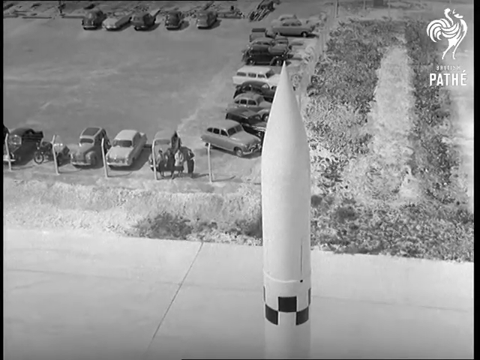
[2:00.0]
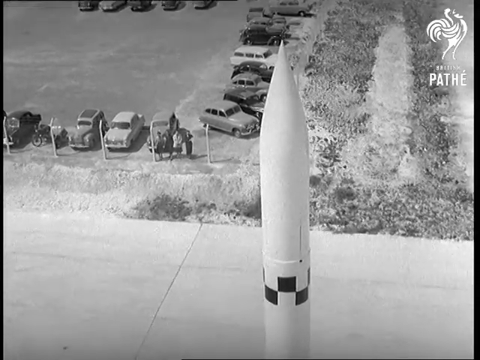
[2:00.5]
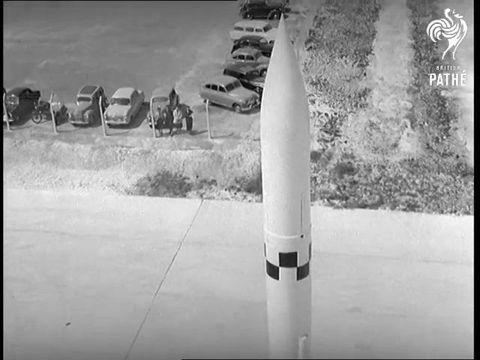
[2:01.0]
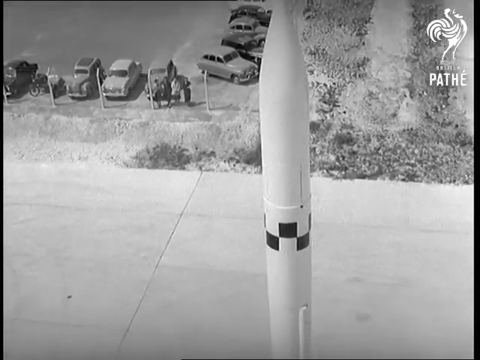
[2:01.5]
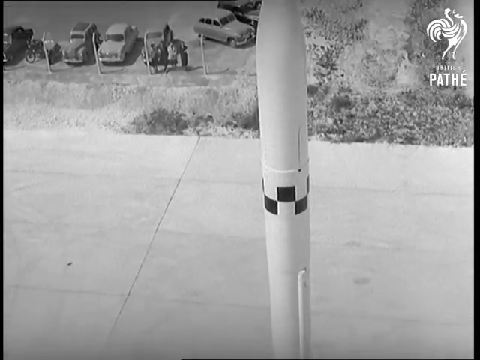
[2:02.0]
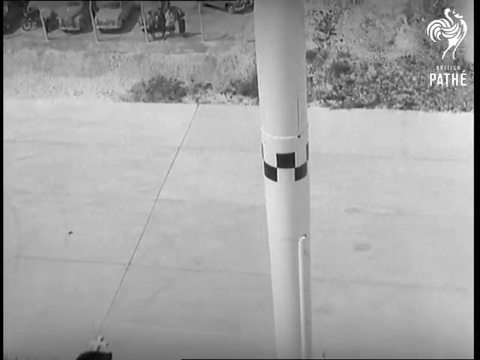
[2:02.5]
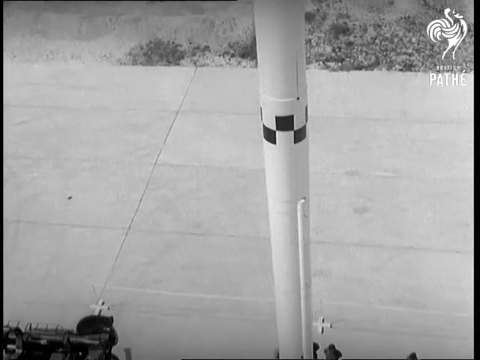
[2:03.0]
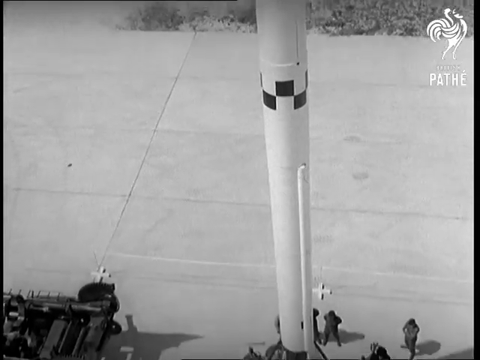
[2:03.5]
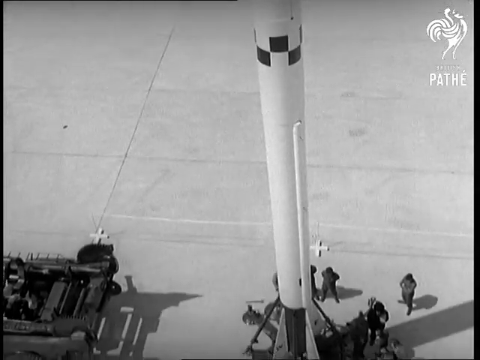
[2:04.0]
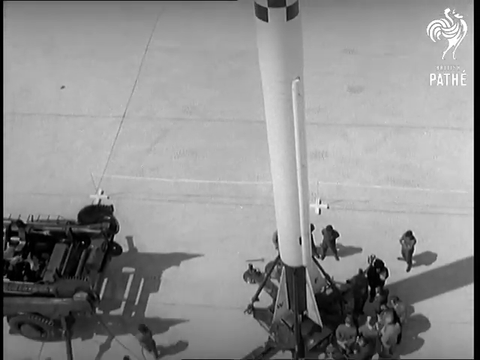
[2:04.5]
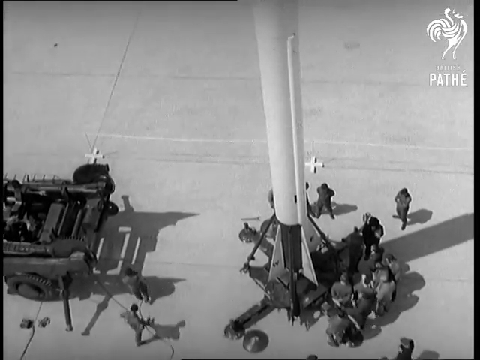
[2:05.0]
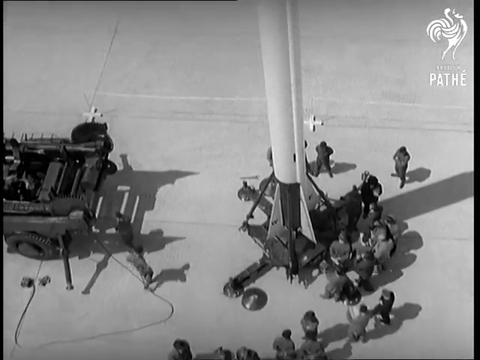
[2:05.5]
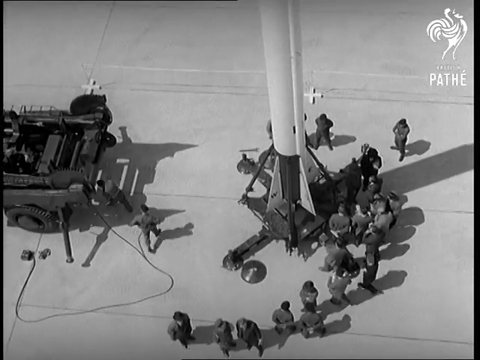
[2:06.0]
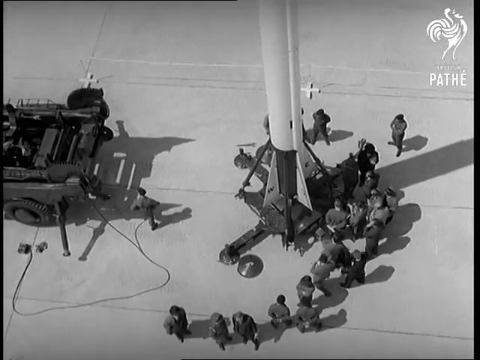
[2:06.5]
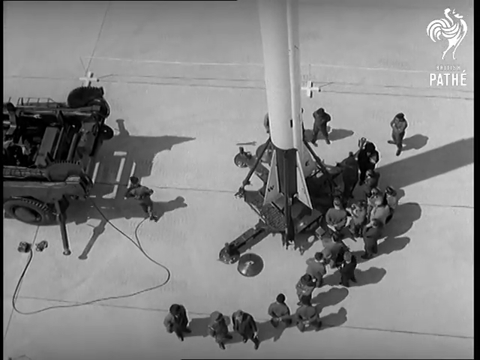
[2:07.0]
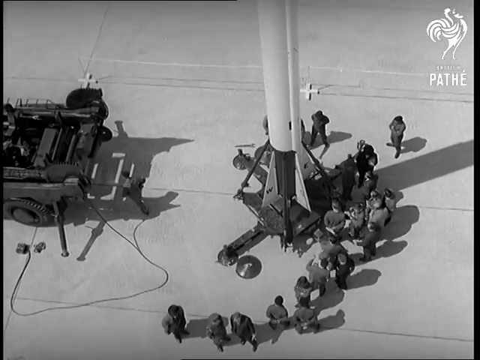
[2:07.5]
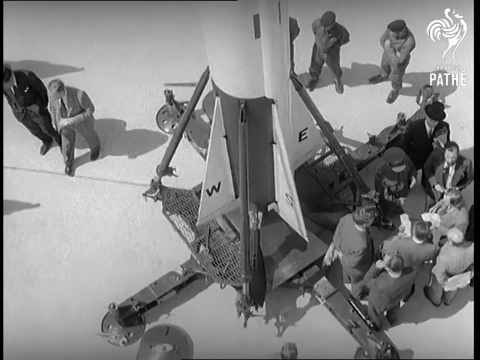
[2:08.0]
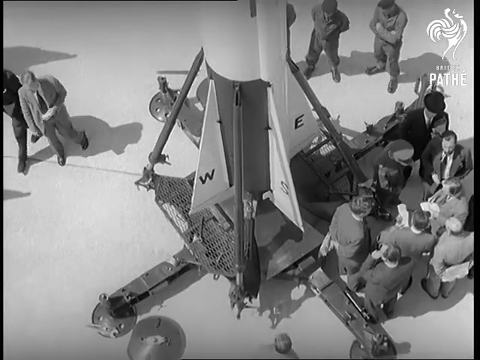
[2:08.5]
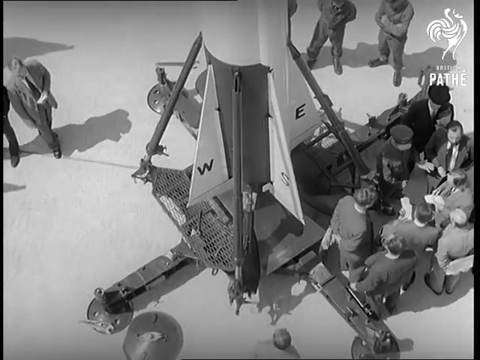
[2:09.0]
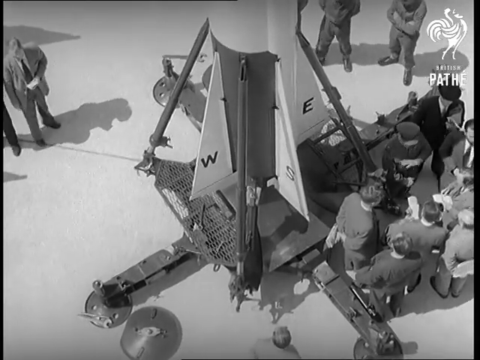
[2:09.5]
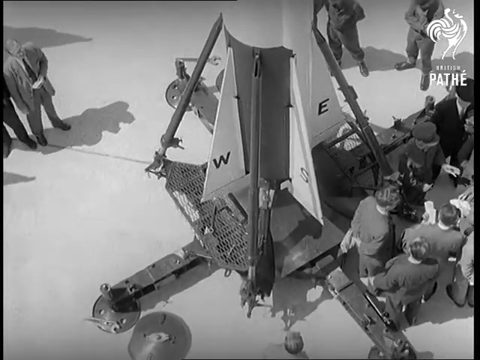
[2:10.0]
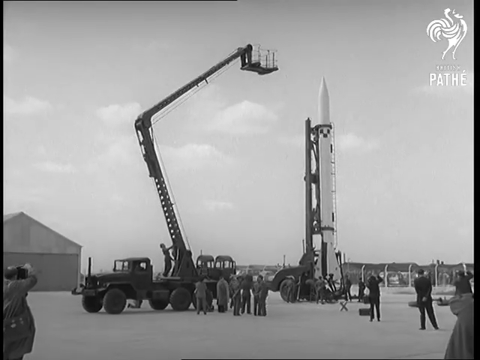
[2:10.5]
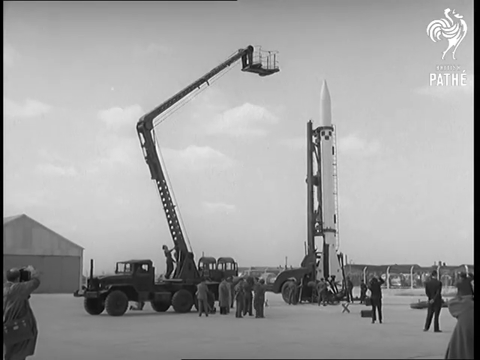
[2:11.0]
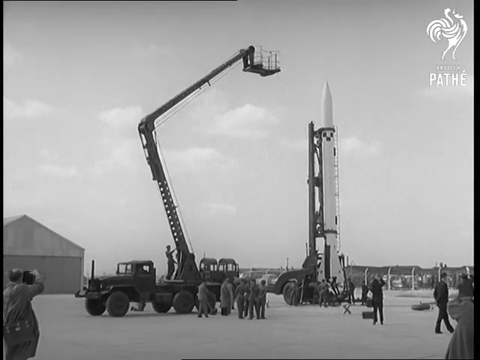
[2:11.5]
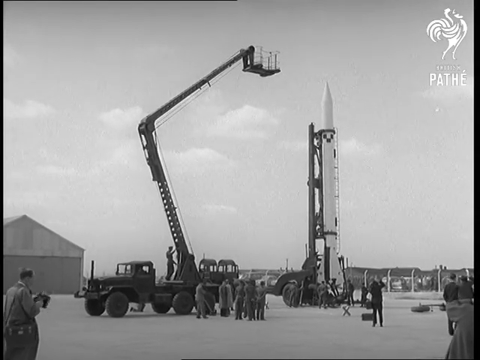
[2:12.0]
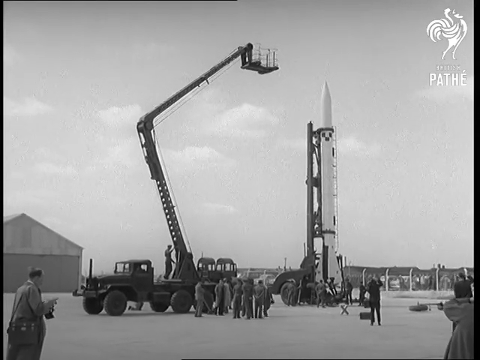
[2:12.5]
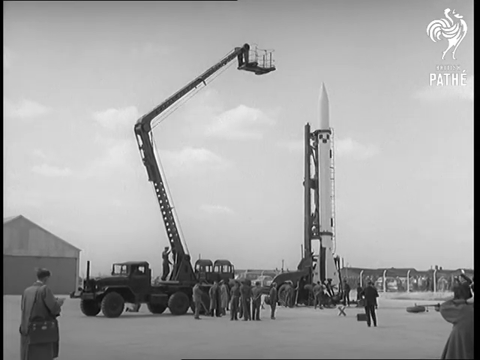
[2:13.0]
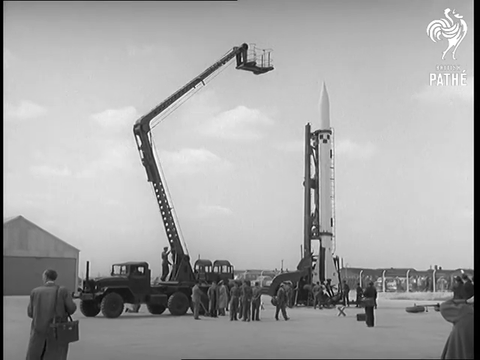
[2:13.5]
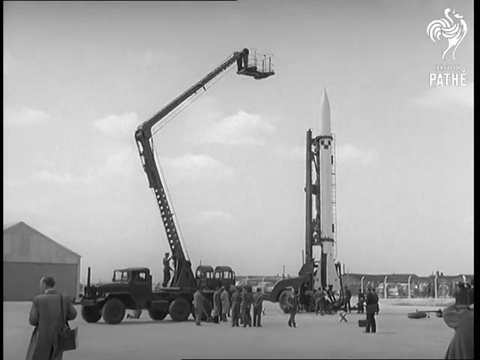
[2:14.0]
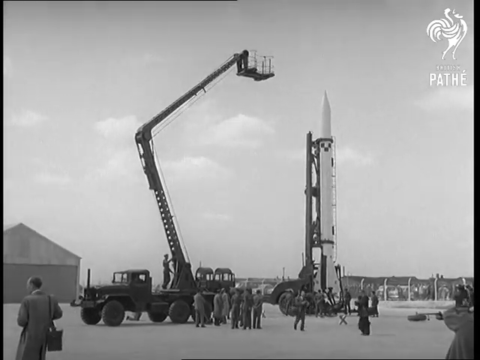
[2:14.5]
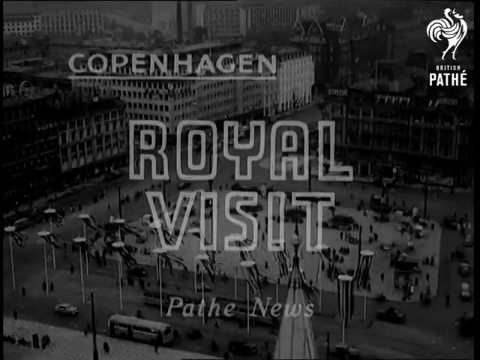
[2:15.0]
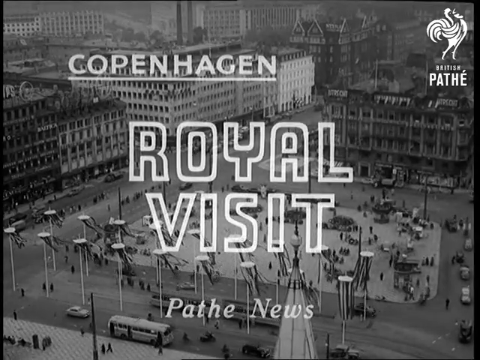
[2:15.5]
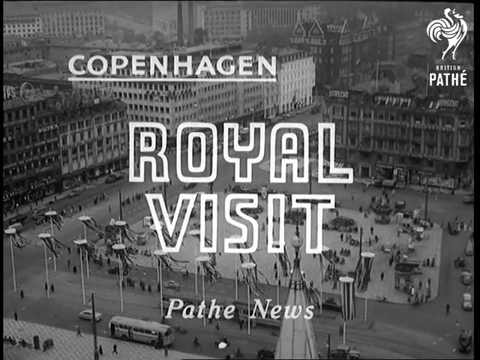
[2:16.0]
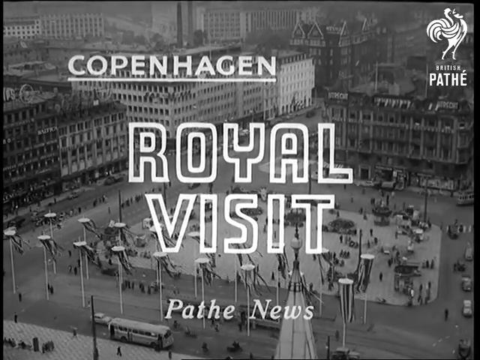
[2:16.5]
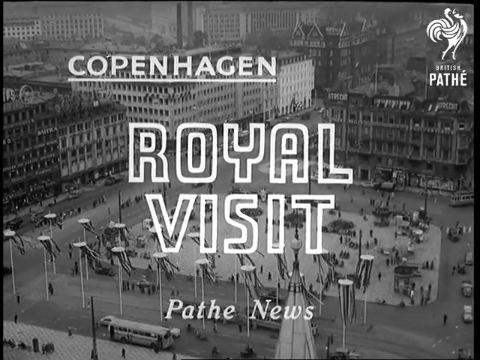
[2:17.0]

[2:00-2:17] An aerial view shows the pointy top of the rocket, angled down, with a parking lot in the background that has cars parked around its perimeter and a median of bushes. The camera pans down to a design several feet below the top, almost a checkerboard but only two rows, black and white. It continues down to the base of the rocket, where men are gathered around the base and the launching pad the rocket rests on. The camera pans closer to the base, over some of the flared fins, which are marked W, S and E for west, south and east. The camera pulls back to show the full height of the rocket, with another truck nearby that has a crane with a carriage at the top, and men standing on the ground nearby. The video closes on titles reading "Copenhagen royal visit Pathé news".